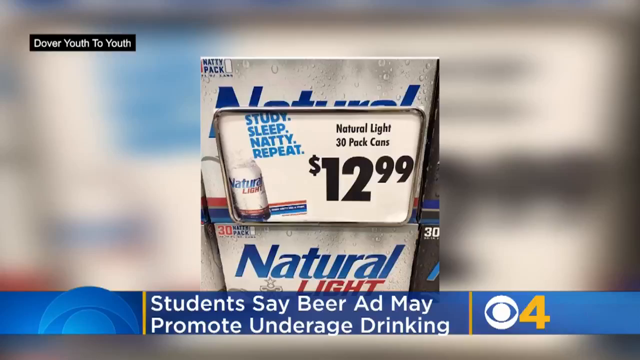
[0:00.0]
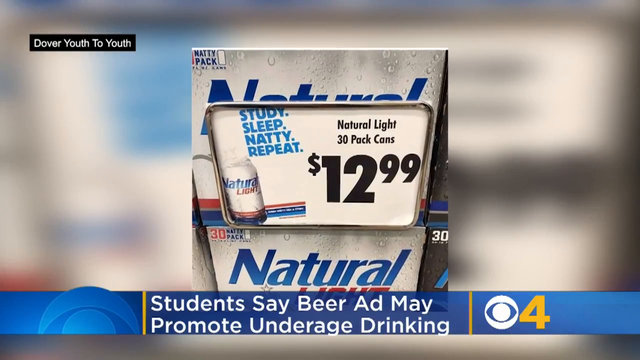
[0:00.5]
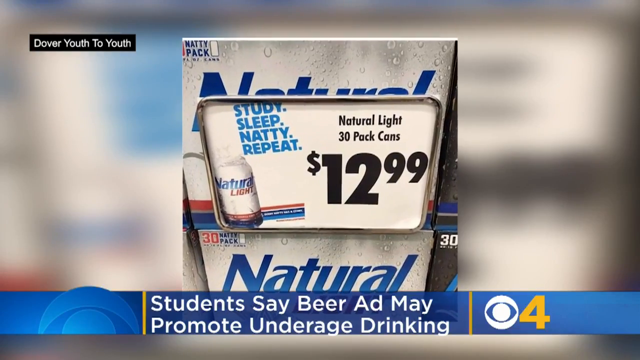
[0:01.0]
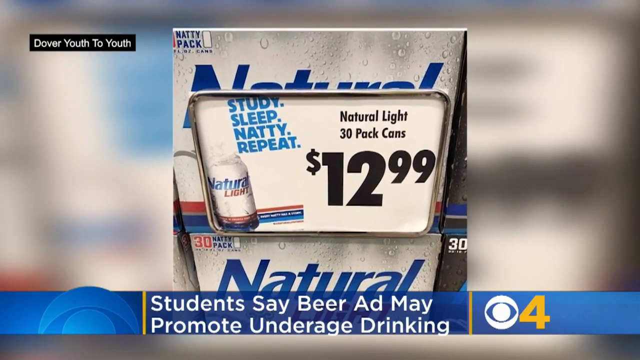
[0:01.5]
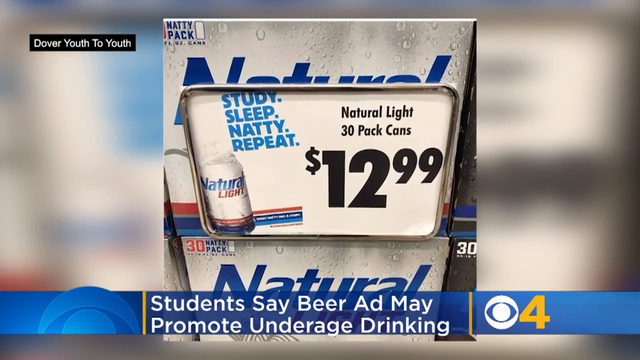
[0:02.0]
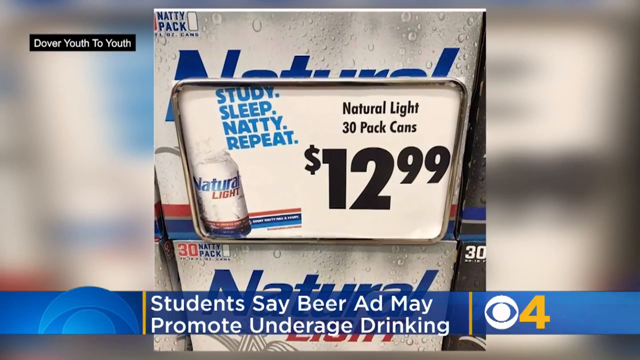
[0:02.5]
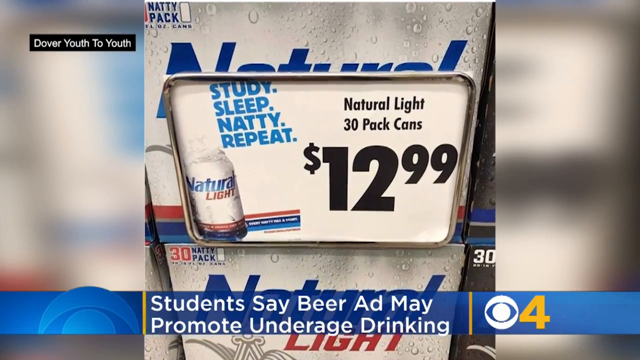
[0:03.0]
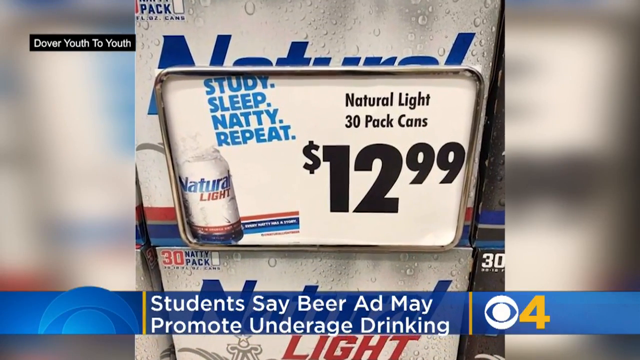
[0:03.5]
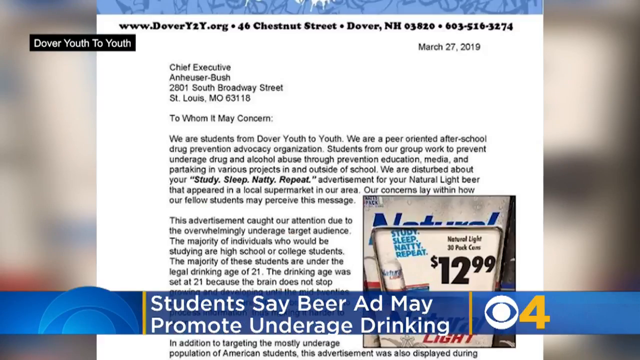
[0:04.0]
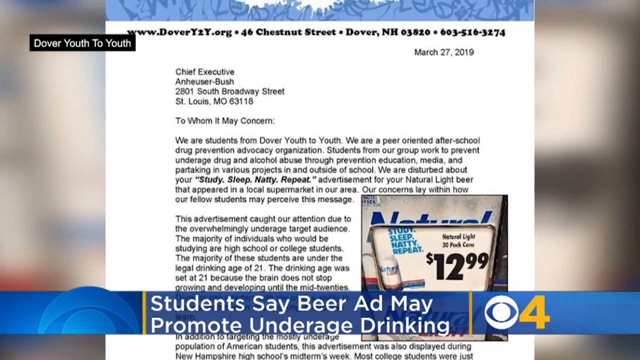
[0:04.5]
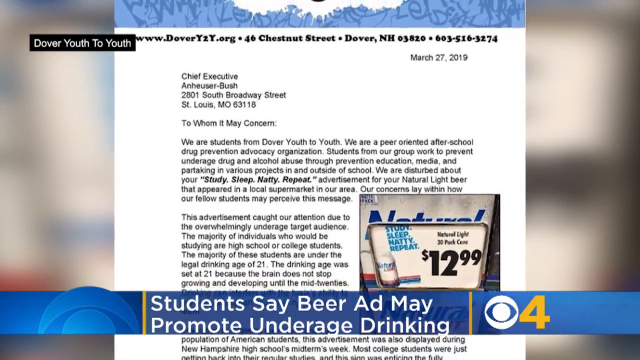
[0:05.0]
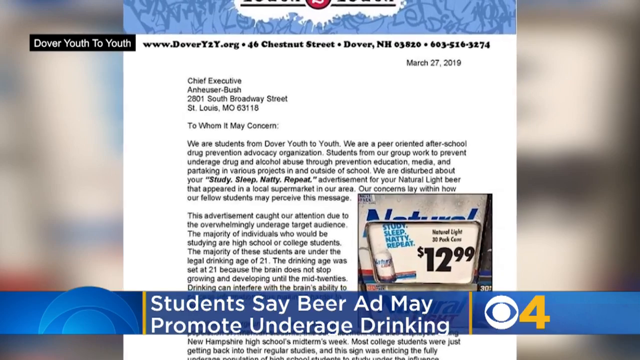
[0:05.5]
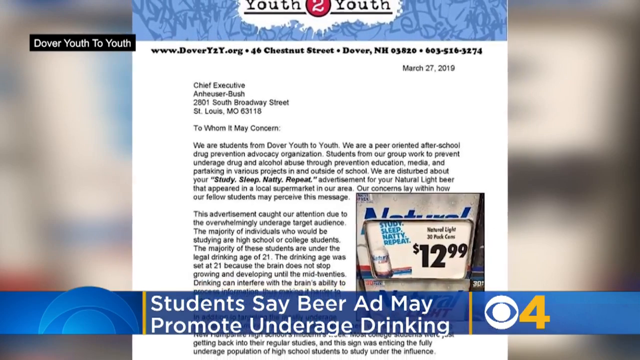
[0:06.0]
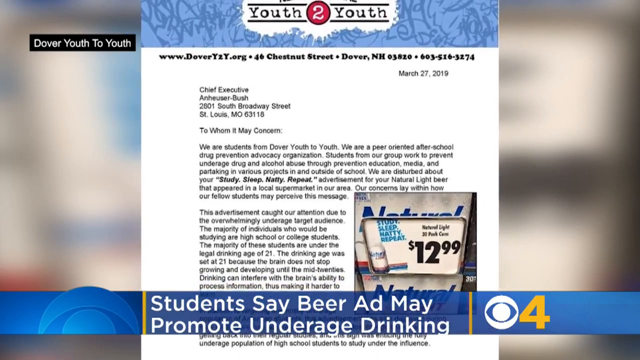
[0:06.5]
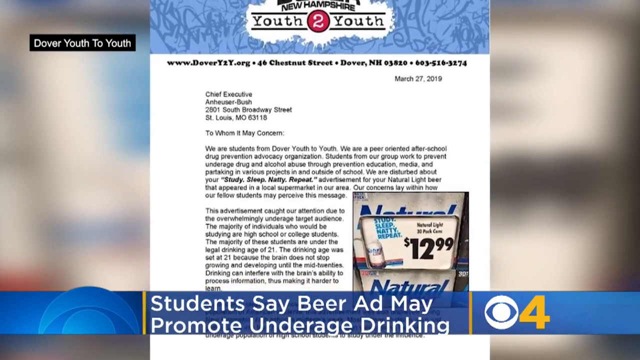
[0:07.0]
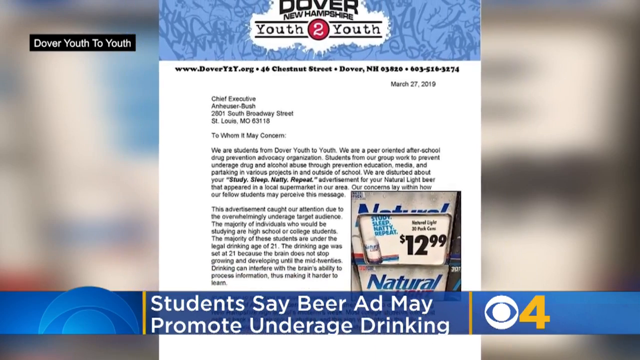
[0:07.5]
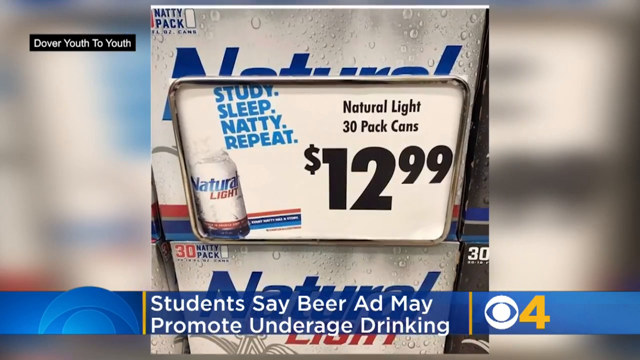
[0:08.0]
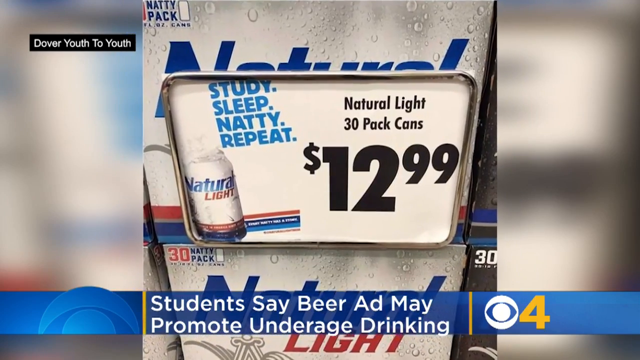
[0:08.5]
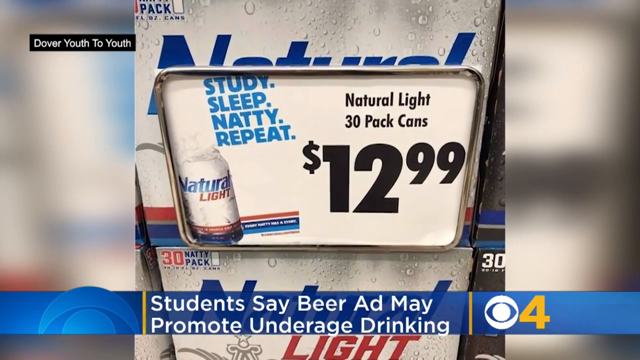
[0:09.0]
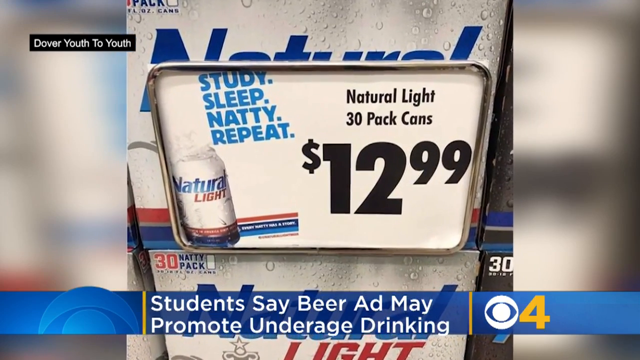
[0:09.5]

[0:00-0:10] The video shows the words "students say beer ad may promote underage drinking."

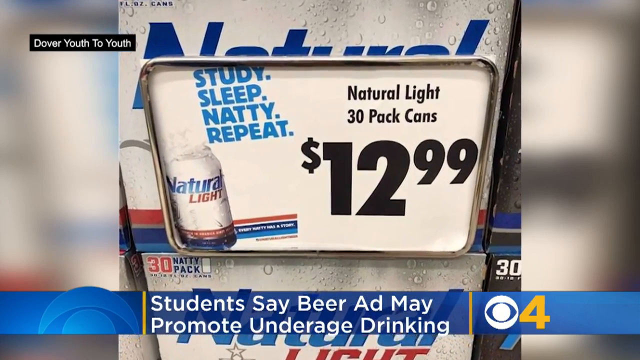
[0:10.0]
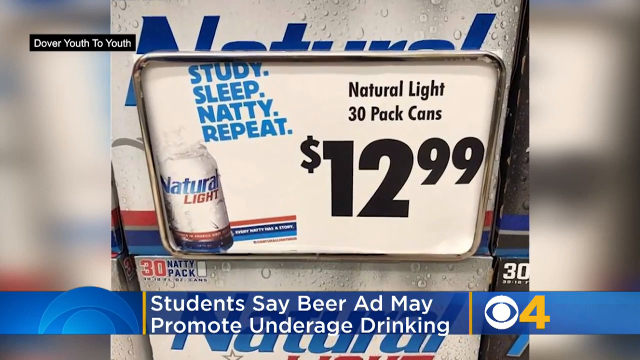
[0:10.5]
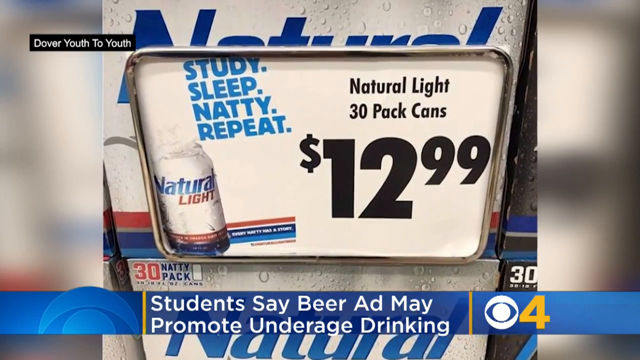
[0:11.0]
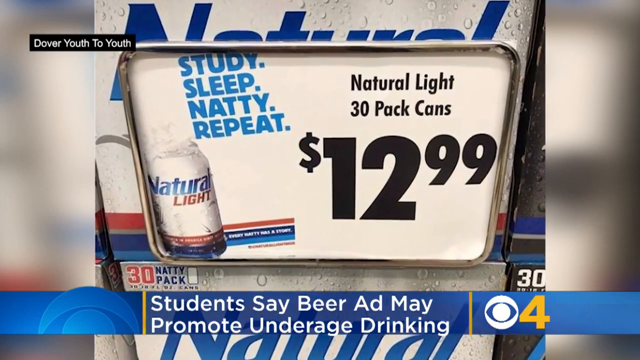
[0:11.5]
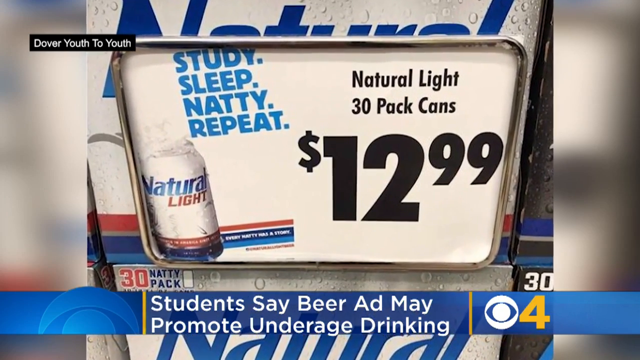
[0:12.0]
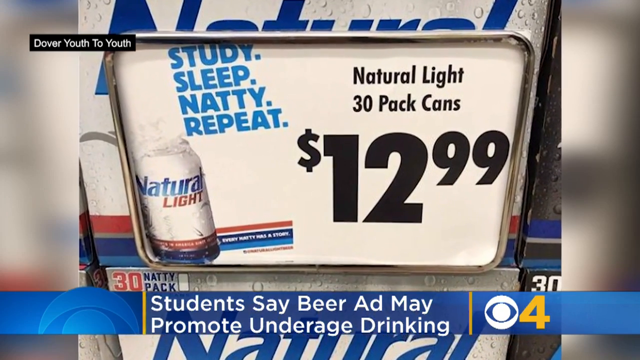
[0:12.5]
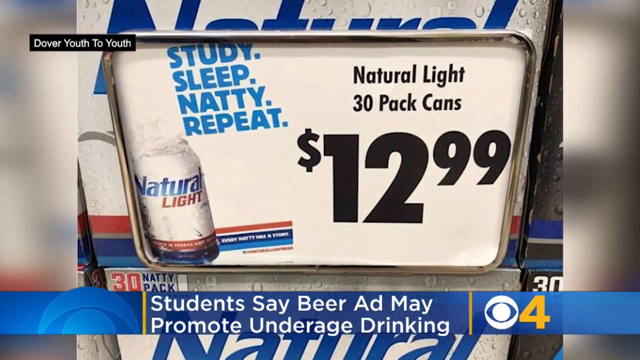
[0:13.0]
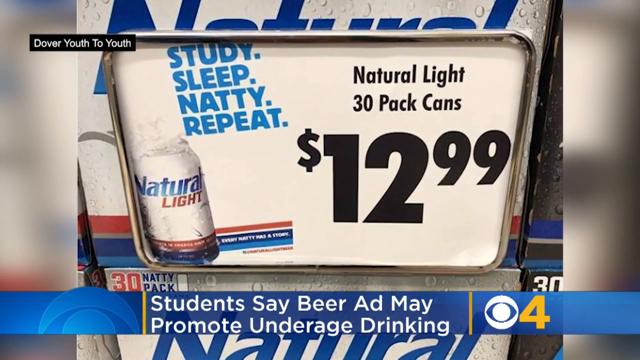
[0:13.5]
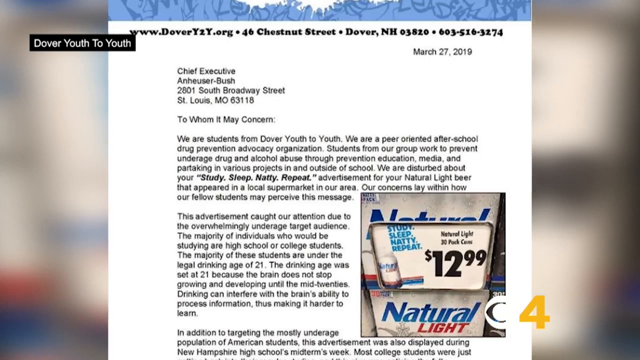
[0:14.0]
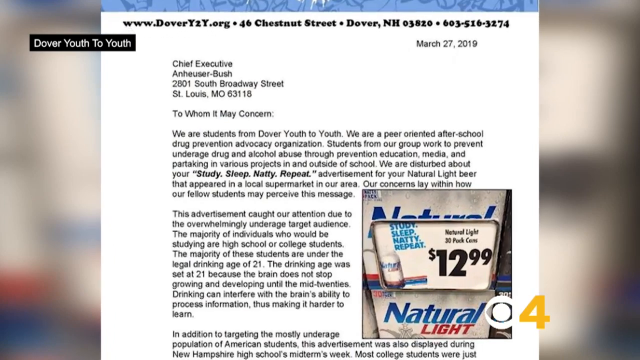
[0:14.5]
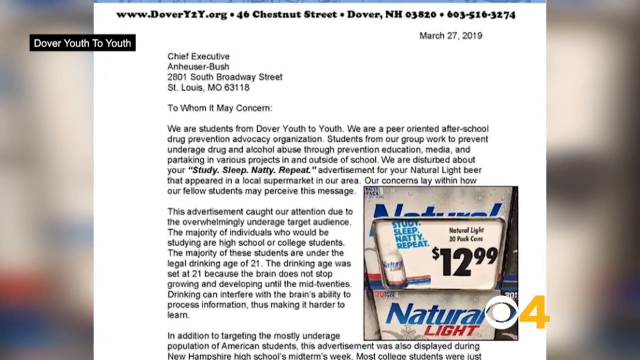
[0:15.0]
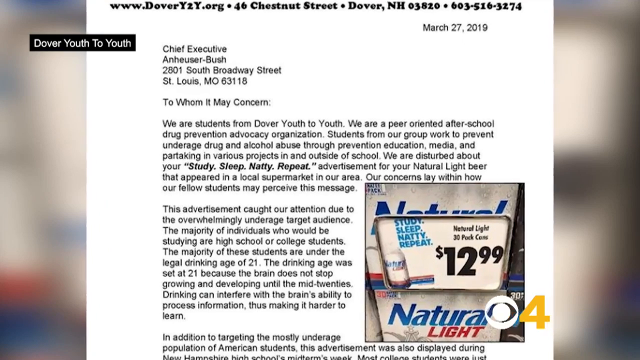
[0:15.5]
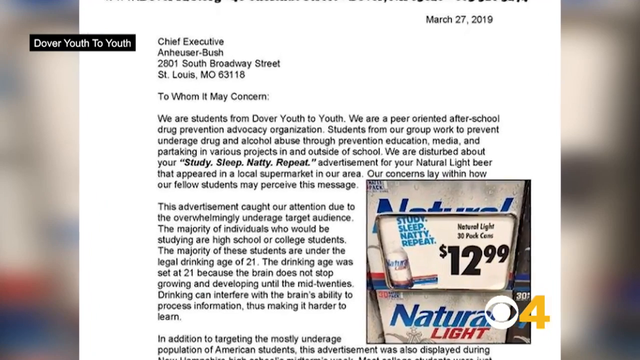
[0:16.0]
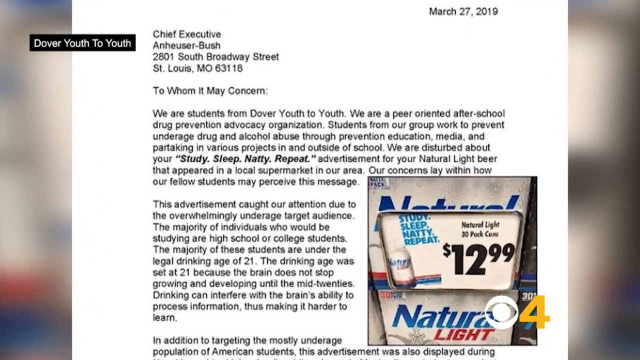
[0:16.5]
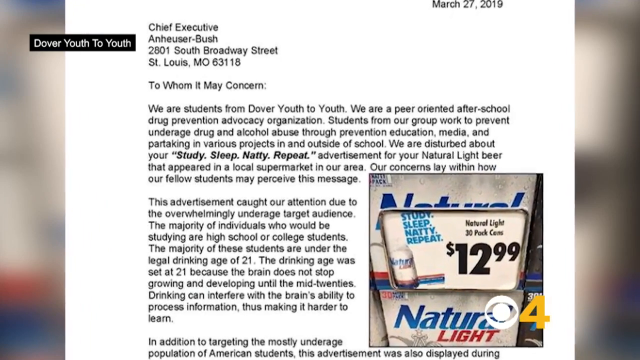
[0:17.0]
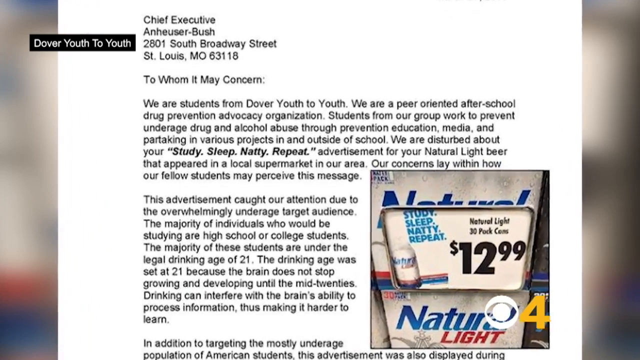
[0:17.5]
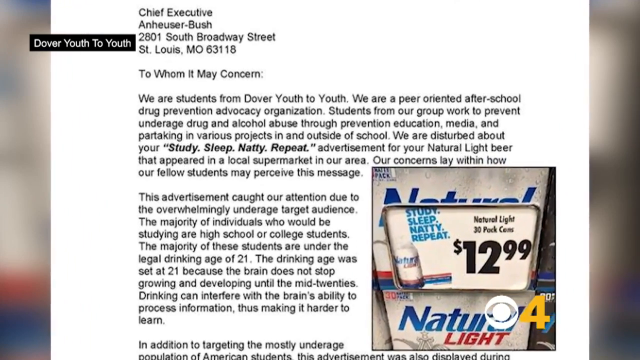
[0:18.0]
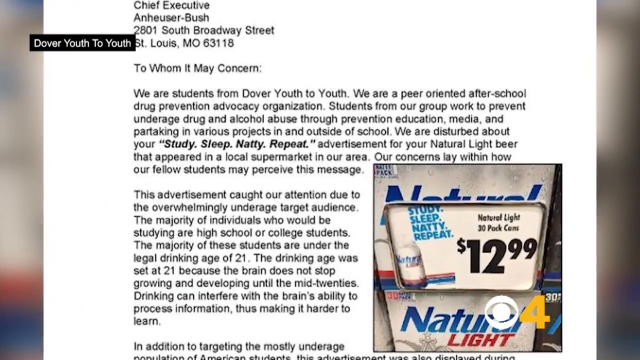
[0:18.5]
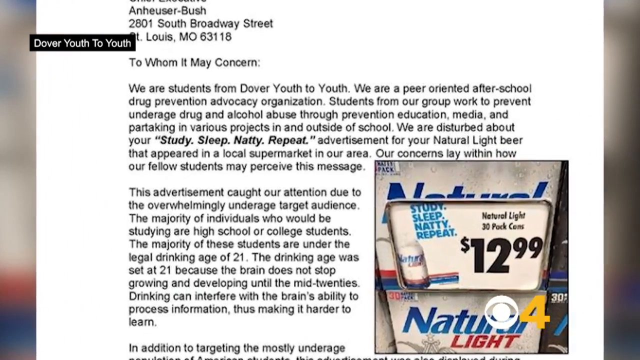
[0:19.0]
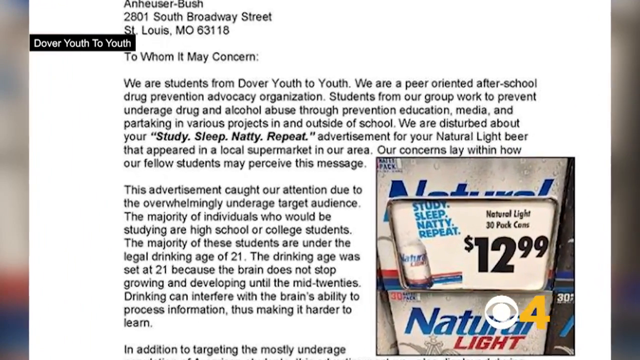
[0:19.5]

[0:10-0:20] A letter is shown. It includes the name "Chief Executive Bush" and the greeting "to whom it may concern," and reads: "we are students from Dover youth to youth. We are peer-oriented, after-school drug prevention advocacy organization. Students from our group work to prevent underage drug and alcohol abuse through prevention, education, media, and partaking in various projects, in and outside of school." It also mentions an advertisement for a natural light beer that appeared in a local supermarket, and reads: "Our concerns live within how our fellow students may perceive this message."